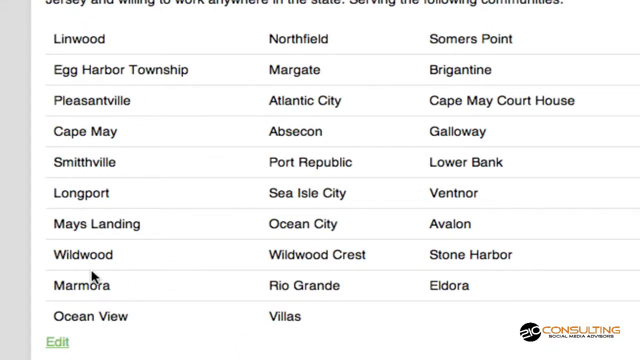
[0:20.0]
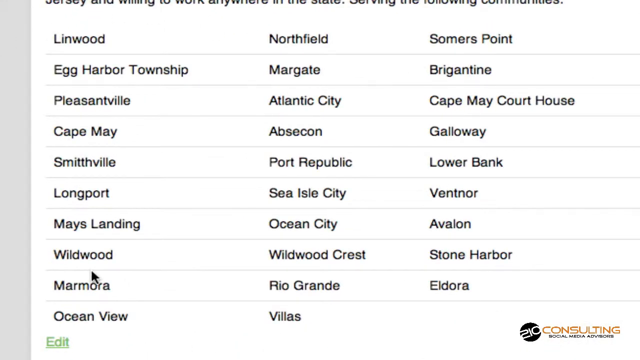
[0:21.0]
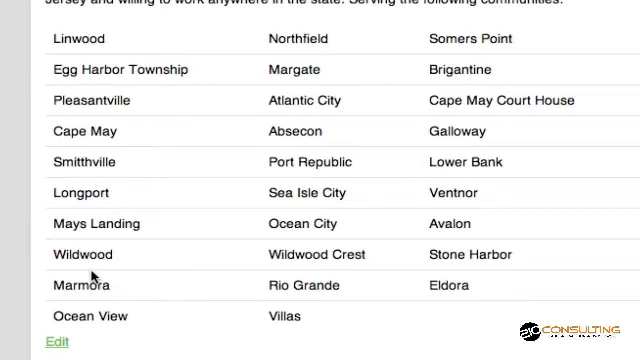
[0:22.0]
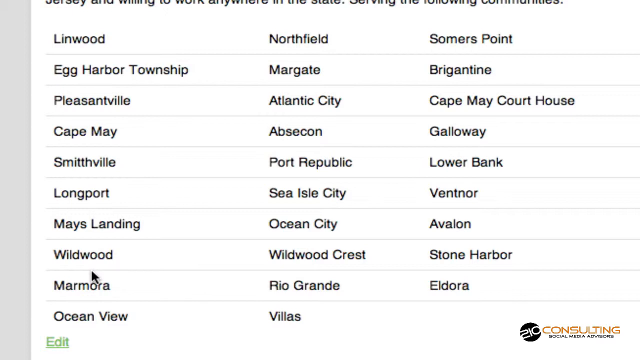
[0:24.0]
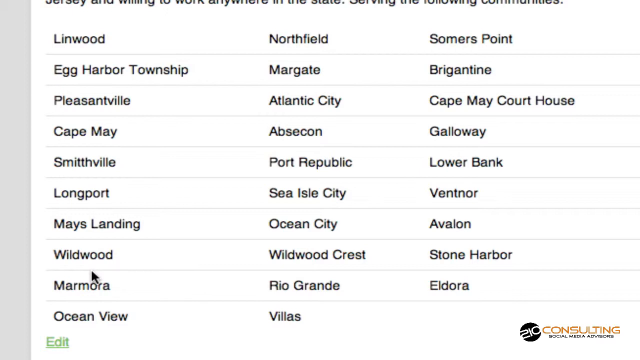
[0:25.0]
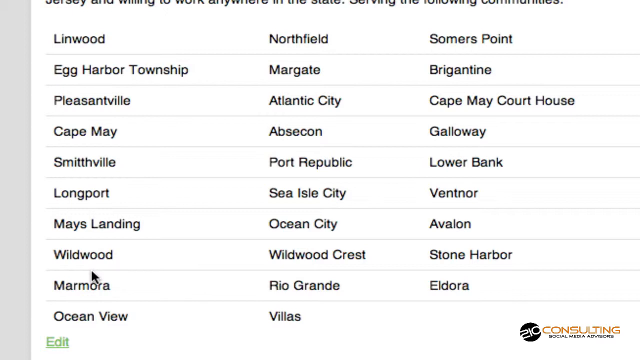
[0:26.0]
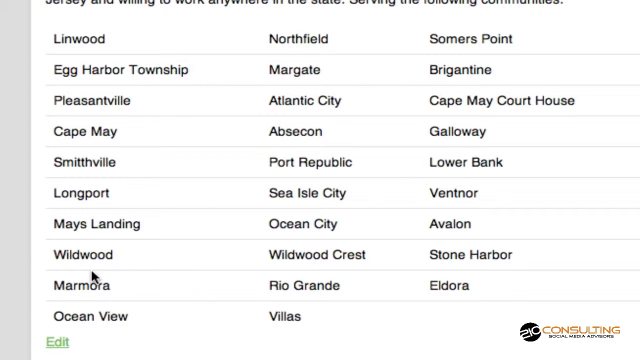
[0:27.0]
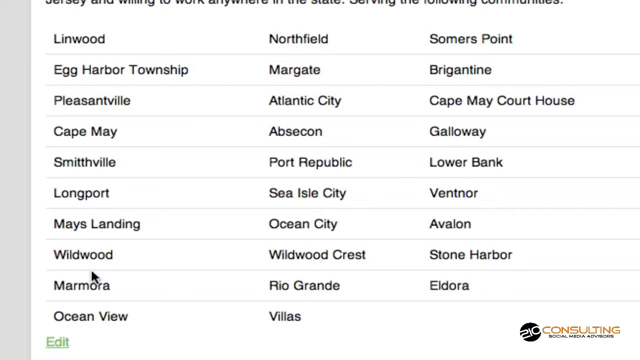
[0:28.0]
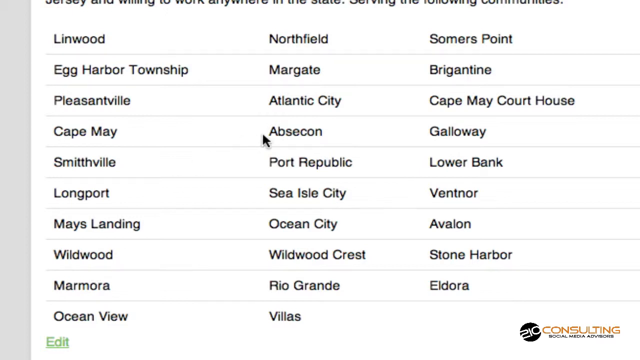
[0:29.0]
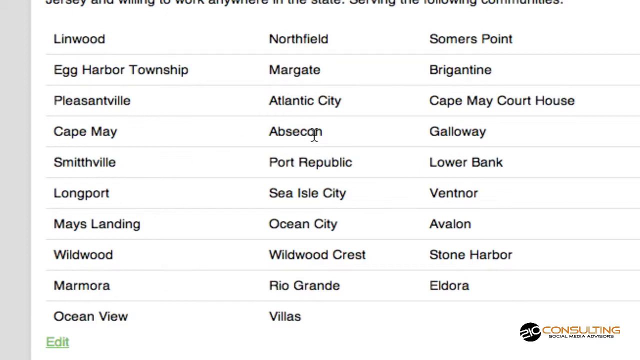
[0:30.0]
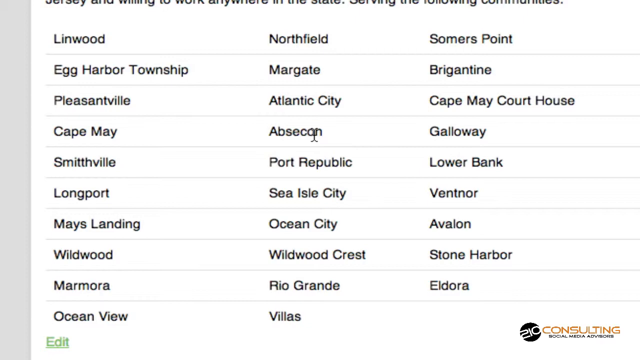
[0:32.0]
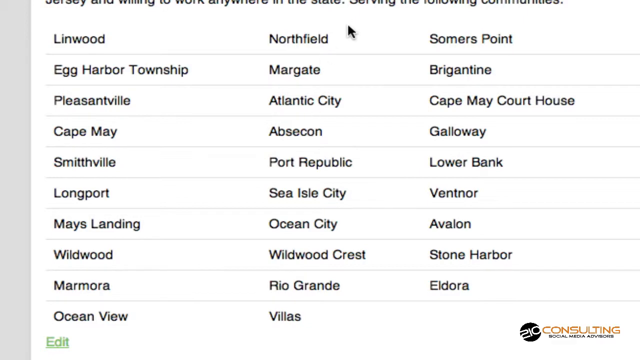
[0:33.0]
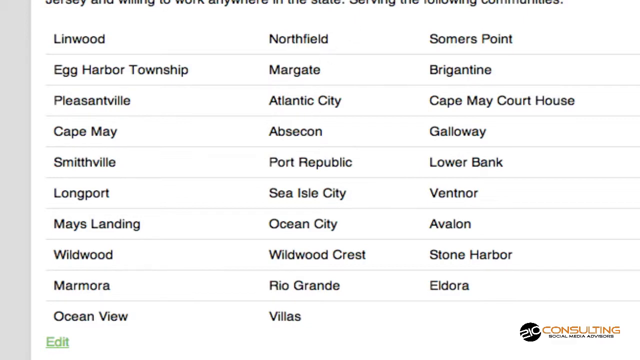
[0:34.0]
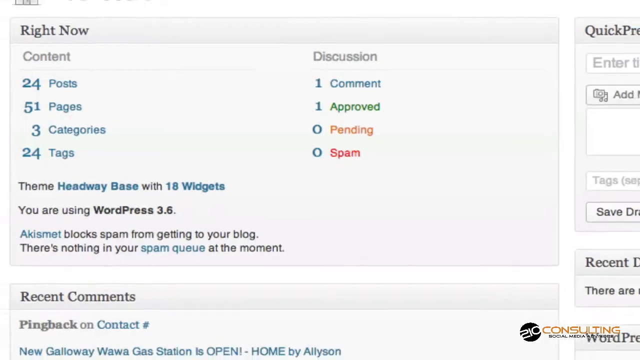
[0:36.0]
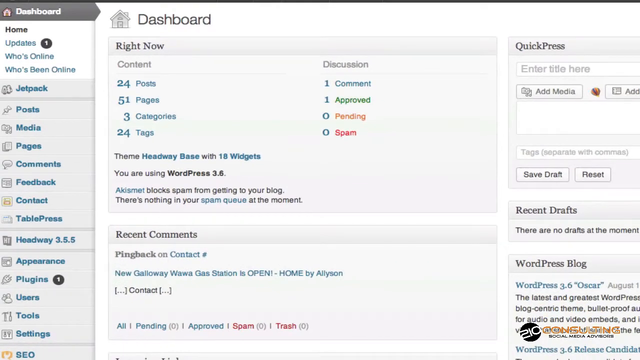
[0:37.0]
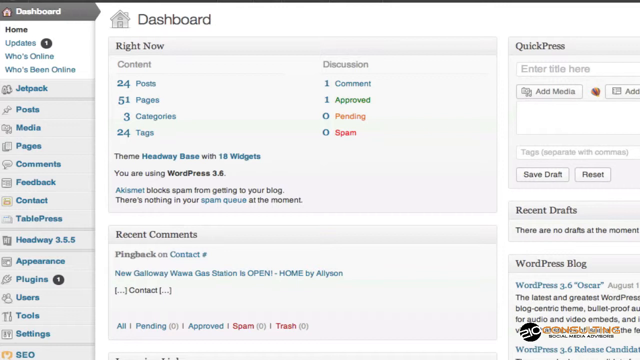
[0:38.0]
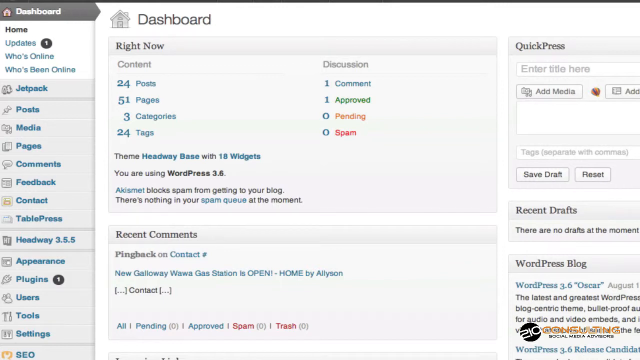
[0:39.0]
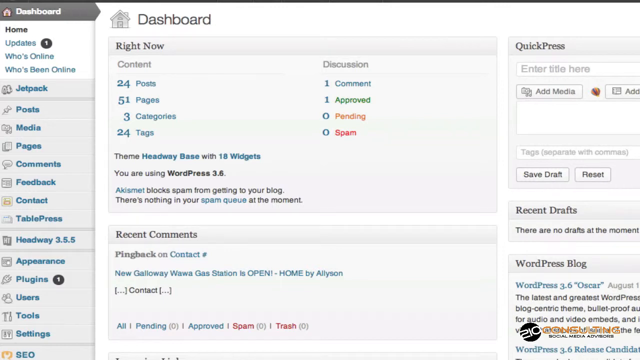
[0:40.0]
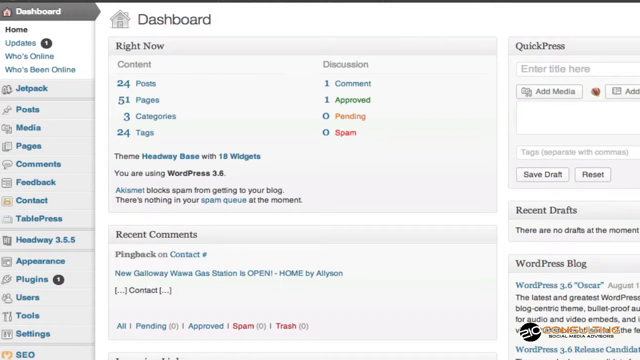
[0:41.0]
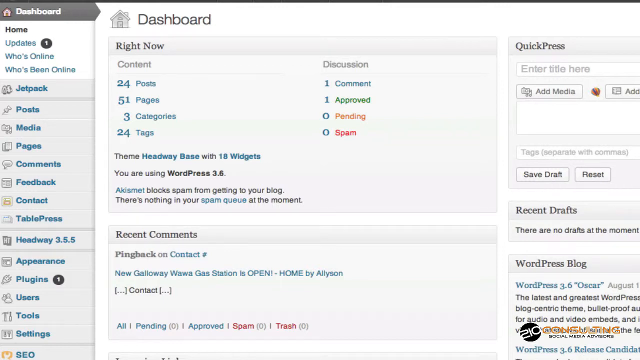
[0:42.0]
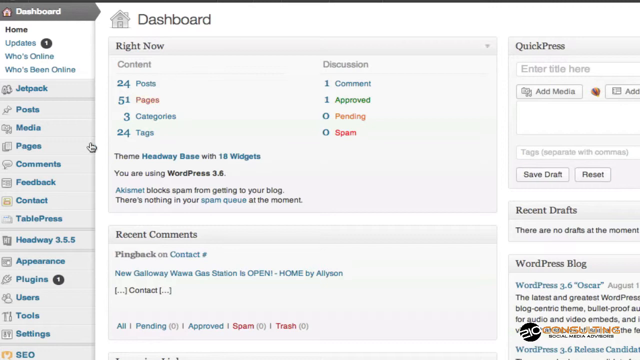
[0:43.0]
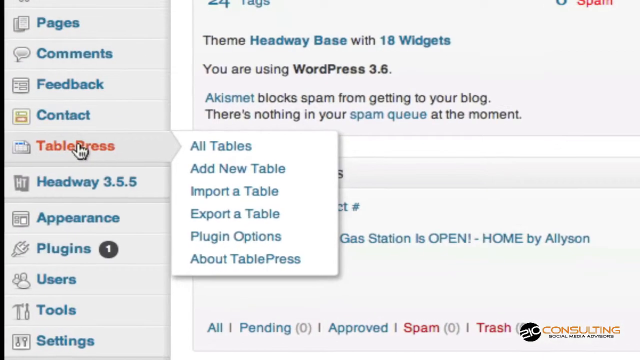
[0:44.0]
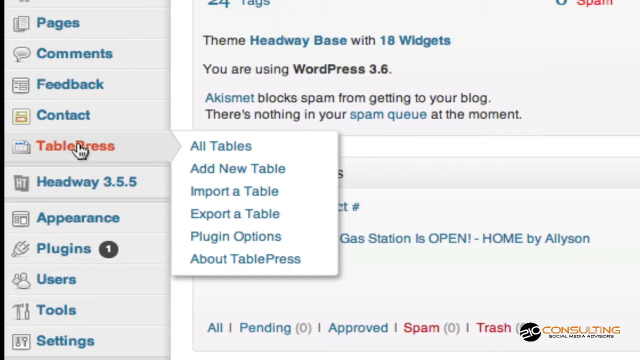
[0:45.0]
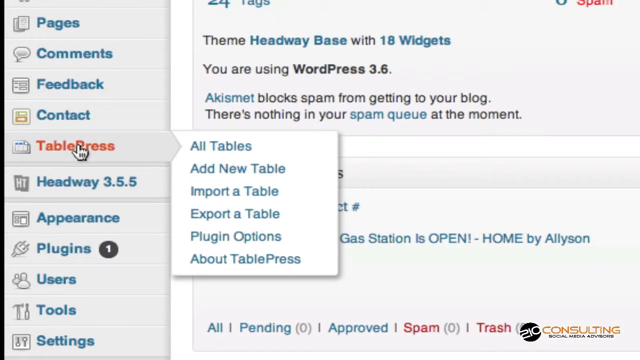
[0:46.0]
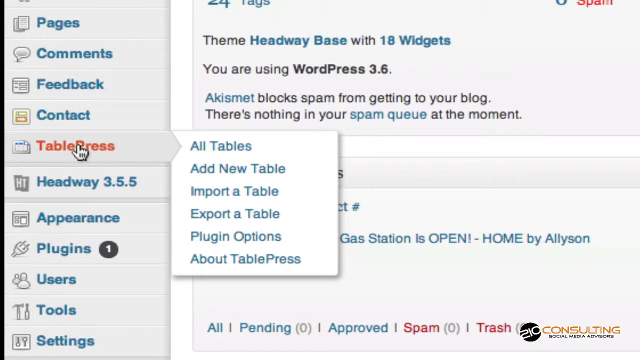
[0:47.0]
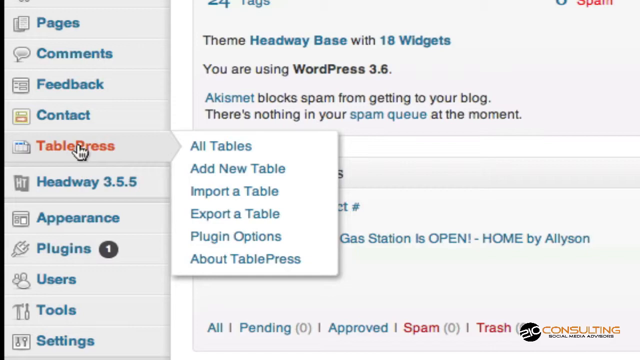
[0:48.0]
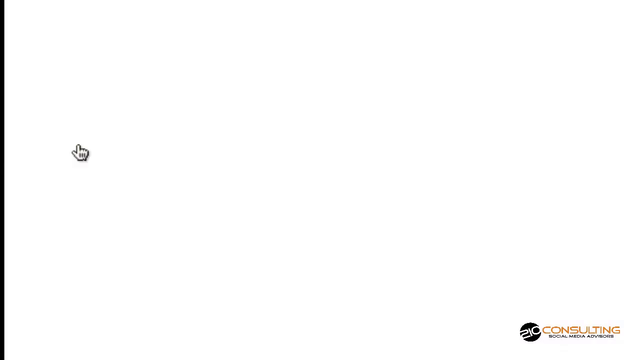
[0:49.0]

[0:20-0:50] A list of names of the places she serves appears in black text on a white background. The top left column reads Linwood, Egg Harbor Township, Pleasantville, Cape May, Smithville, Longport, Mays Landing, Wildwood, Marmora, Oceanview. The middle column begins with Northfield, followed by Margate, Atlantic City, Abscon, Port Republic, Sea Isle City, Ocean City, Wildwood Crest, Rio Grande, and Villas. The third column, on the right side of the screen, begins with Summers Point, followed by Brigantine, Cape May Courthouse, Galloway, Lower Bank, Ventnor, Avalon, Stone Harbor, and Eldora. The cursor moves around the web page before going to another screen titled "Dashboard". On the far left is a menu bar with a variety of options and blue hyperlinks. Beneath the word "Dashboard", the selected option, it says "right now". The user moves the cursor over so the little hand appears and highlights TablePress, which opens a menu to the right. The screen then changes to a brief page that has a photo of a man.